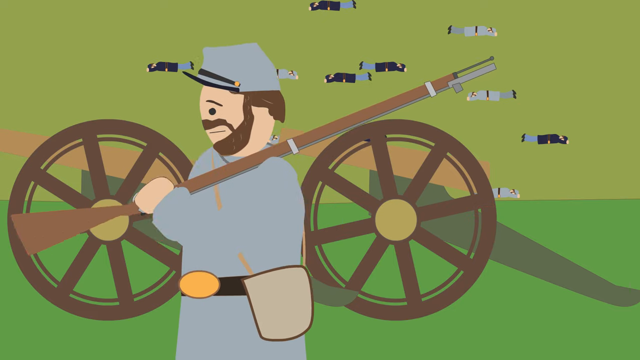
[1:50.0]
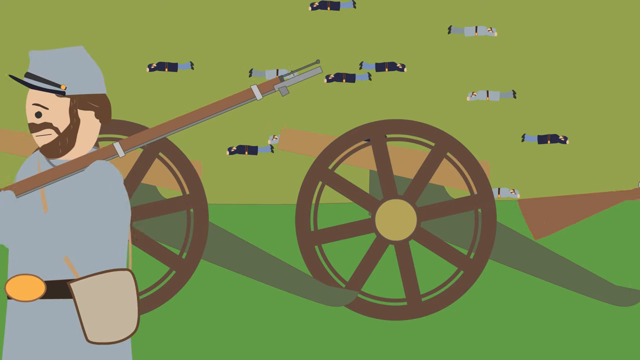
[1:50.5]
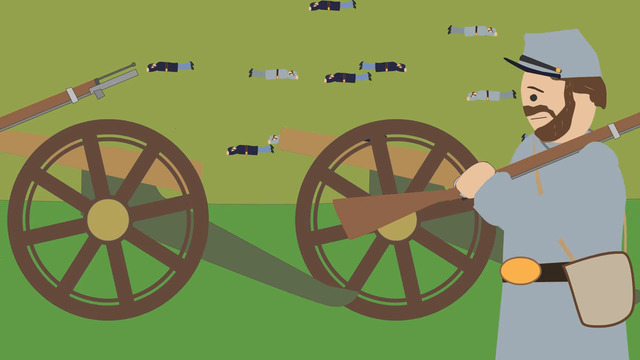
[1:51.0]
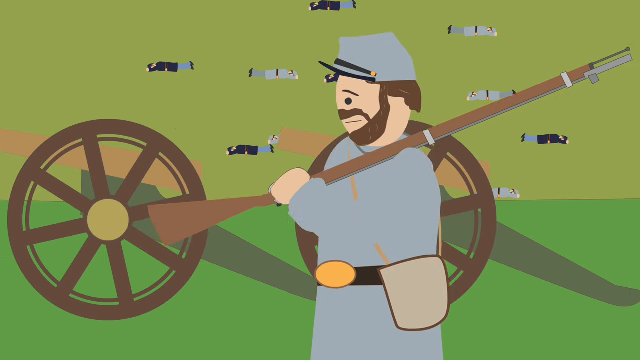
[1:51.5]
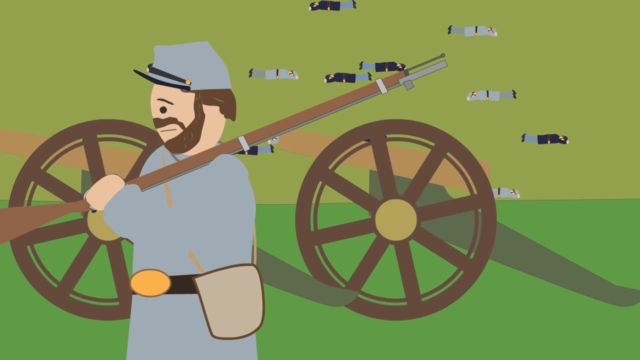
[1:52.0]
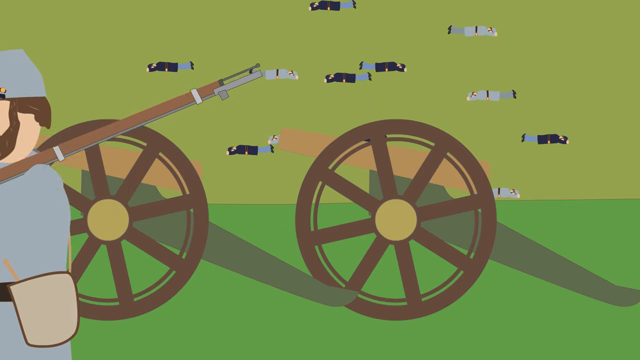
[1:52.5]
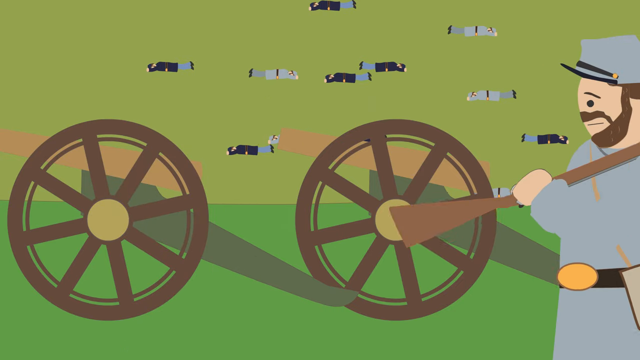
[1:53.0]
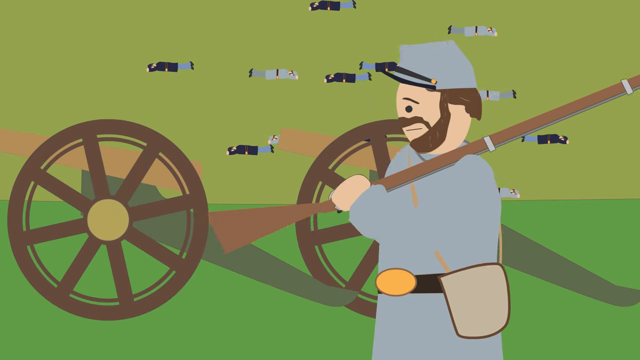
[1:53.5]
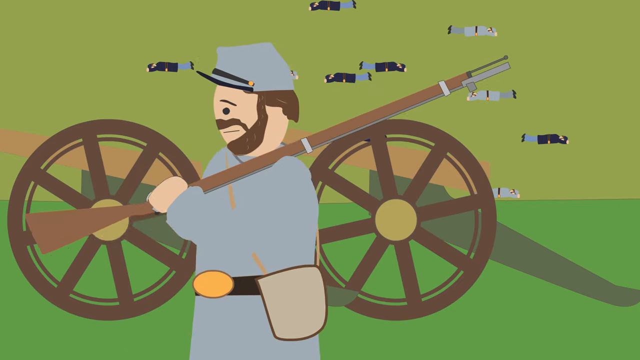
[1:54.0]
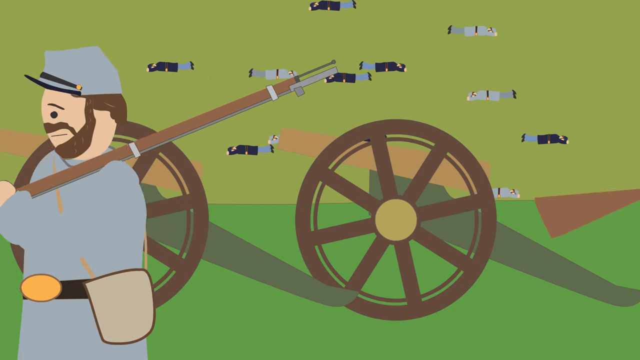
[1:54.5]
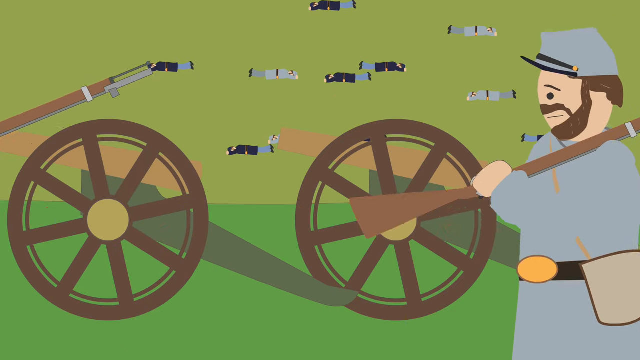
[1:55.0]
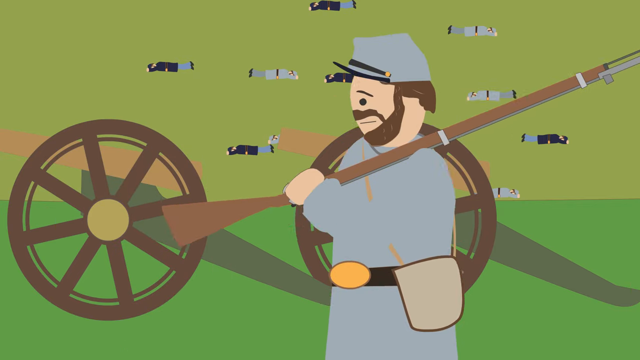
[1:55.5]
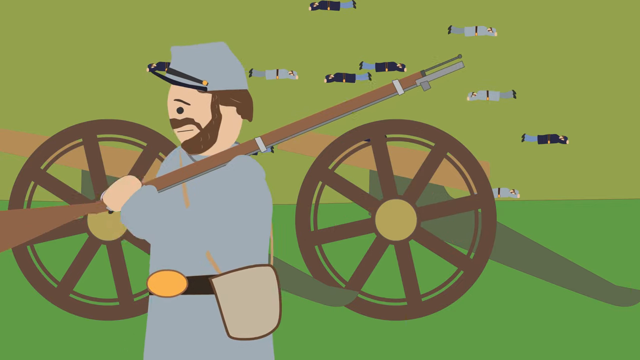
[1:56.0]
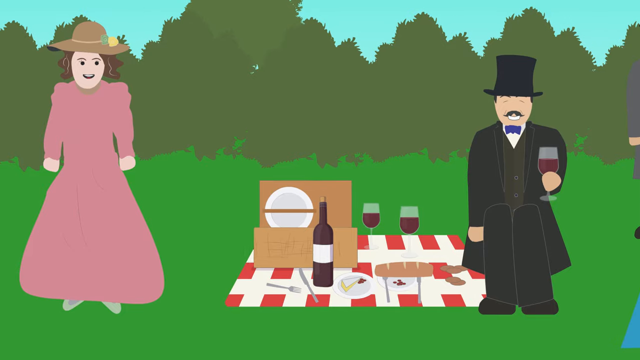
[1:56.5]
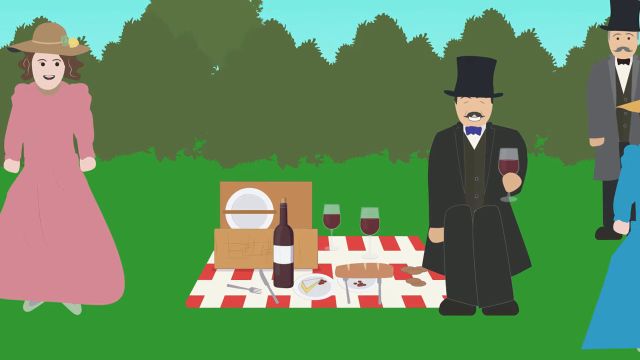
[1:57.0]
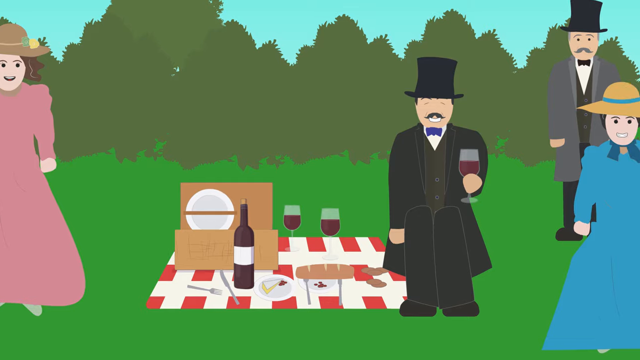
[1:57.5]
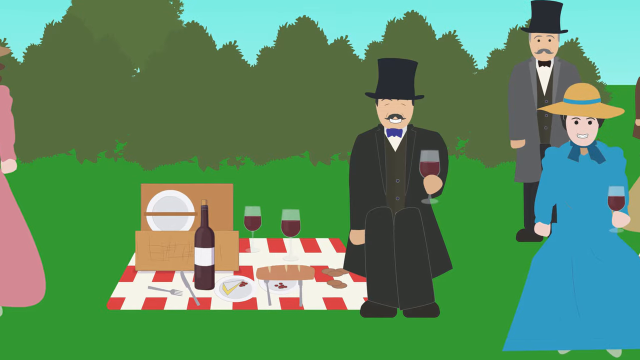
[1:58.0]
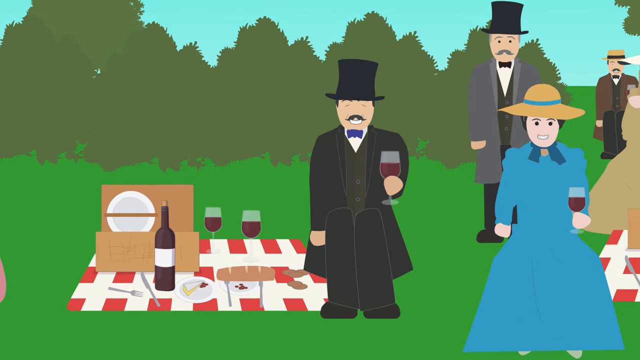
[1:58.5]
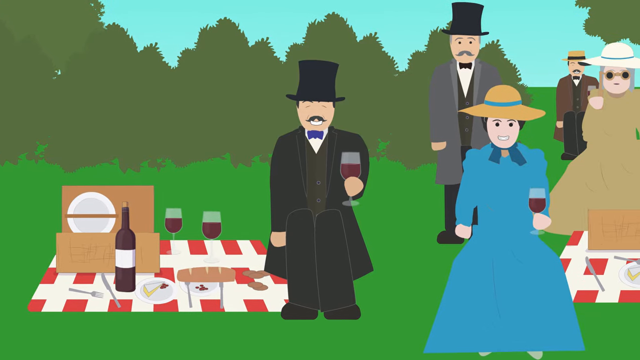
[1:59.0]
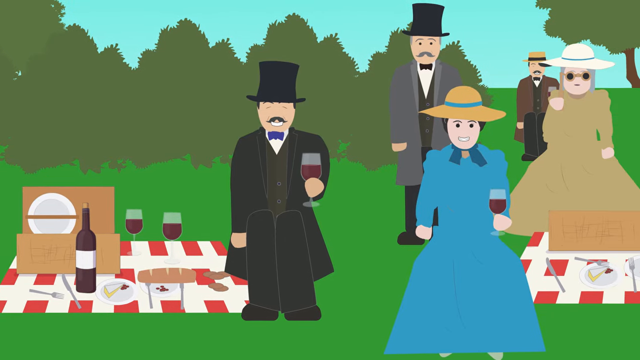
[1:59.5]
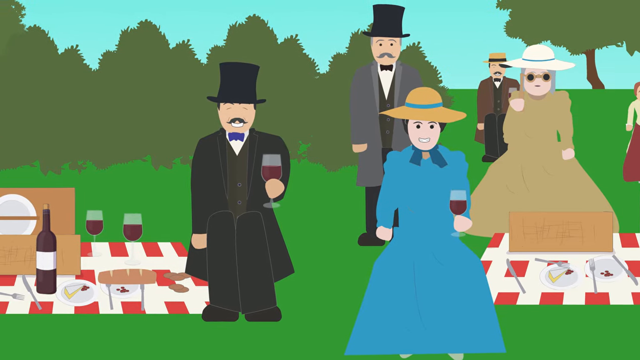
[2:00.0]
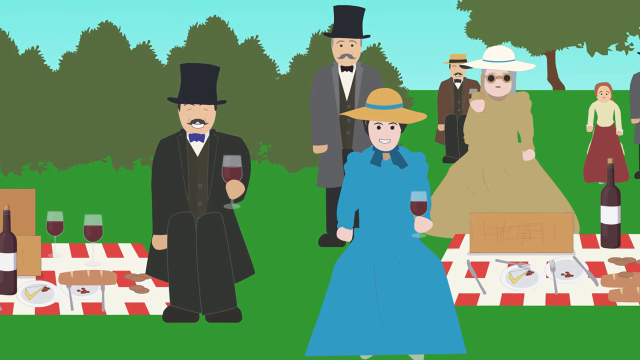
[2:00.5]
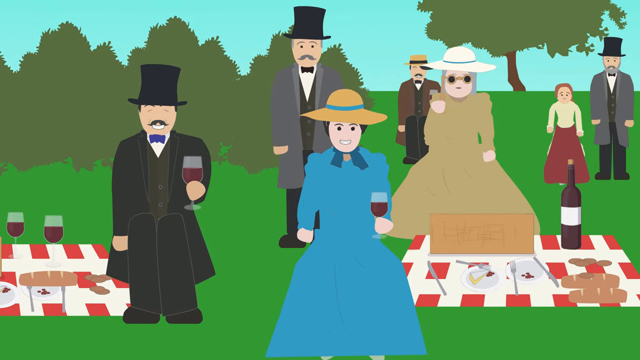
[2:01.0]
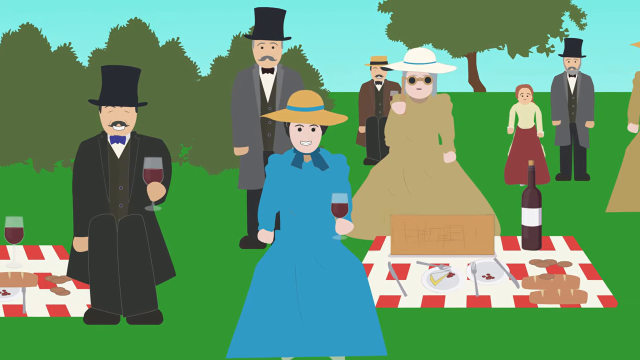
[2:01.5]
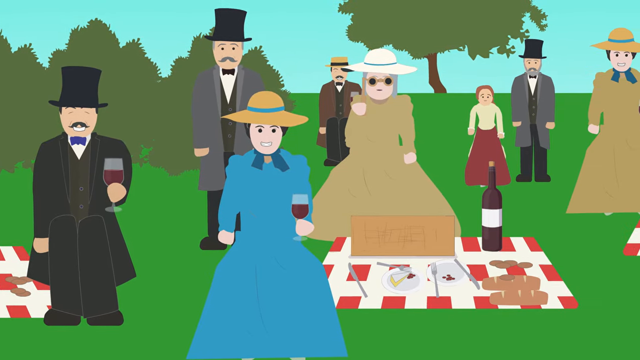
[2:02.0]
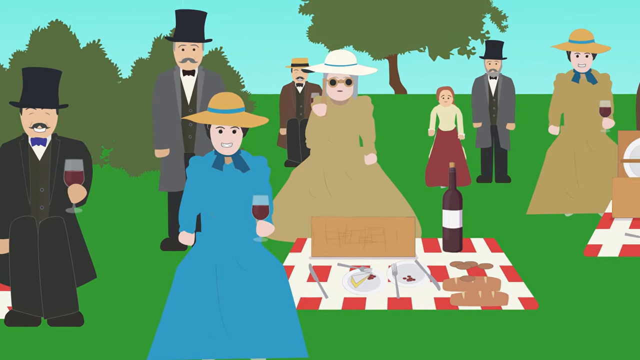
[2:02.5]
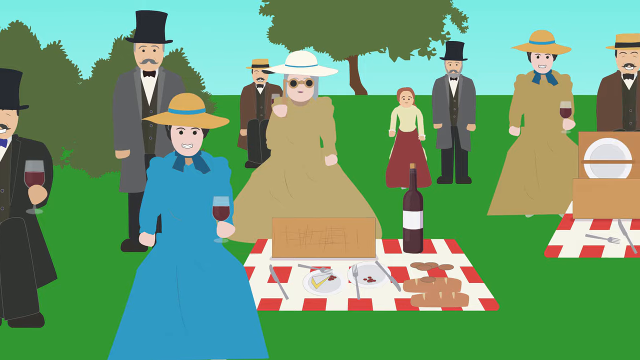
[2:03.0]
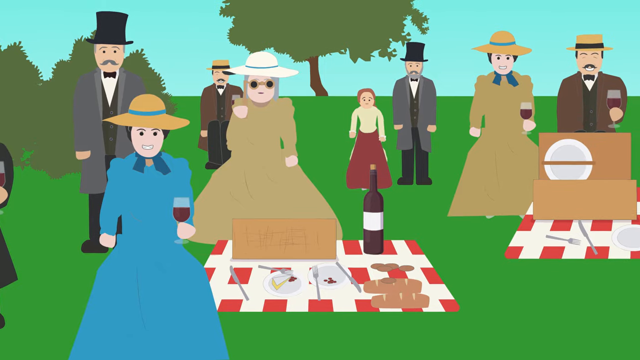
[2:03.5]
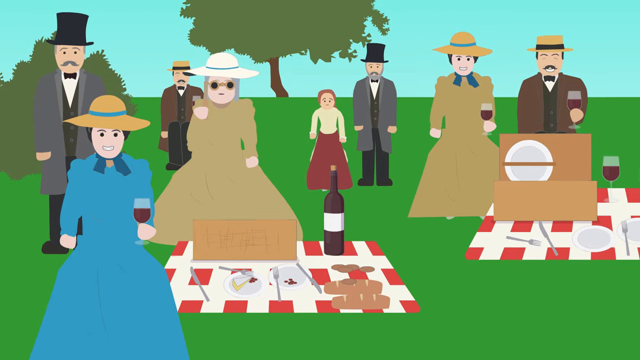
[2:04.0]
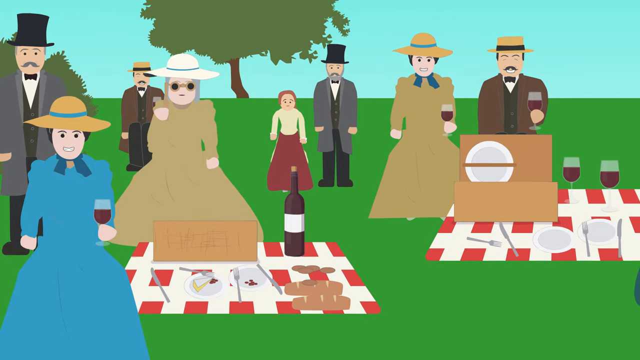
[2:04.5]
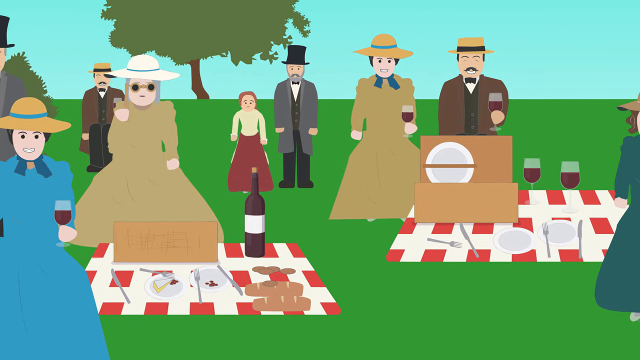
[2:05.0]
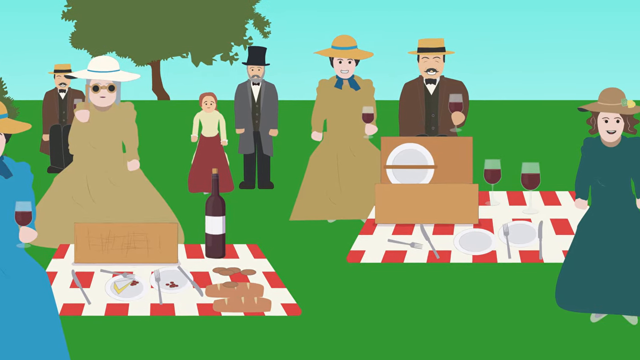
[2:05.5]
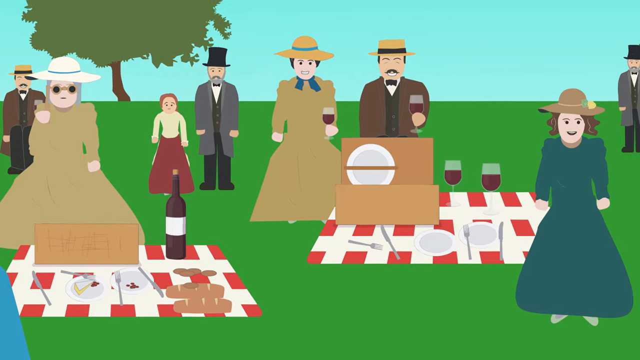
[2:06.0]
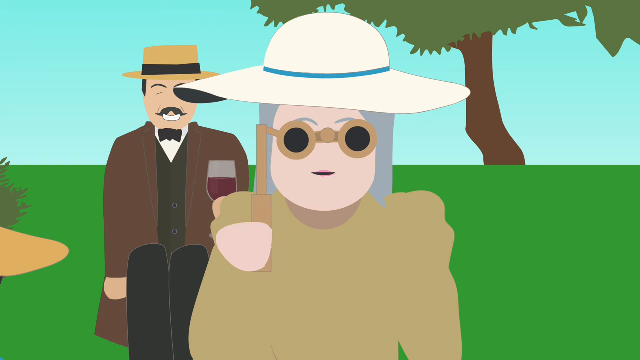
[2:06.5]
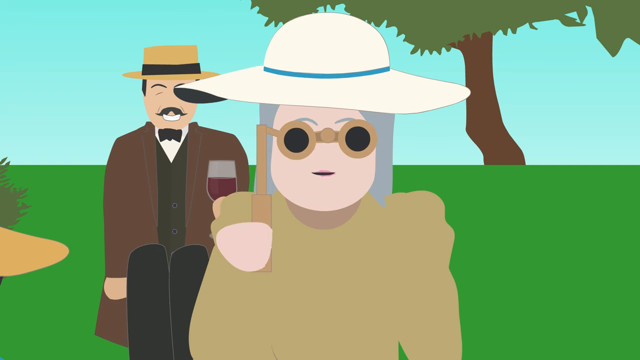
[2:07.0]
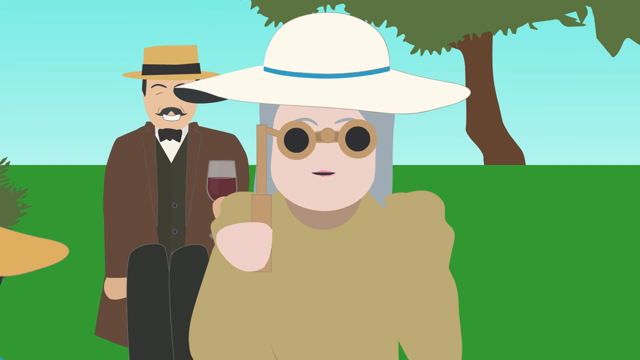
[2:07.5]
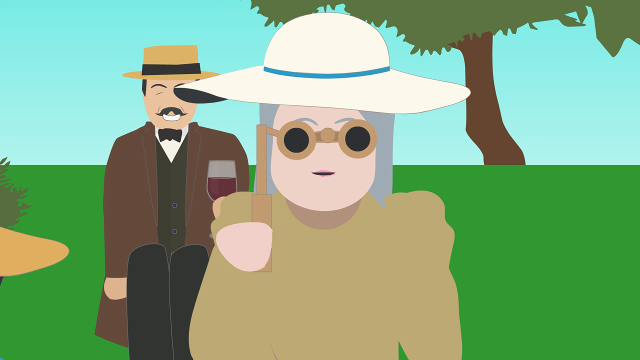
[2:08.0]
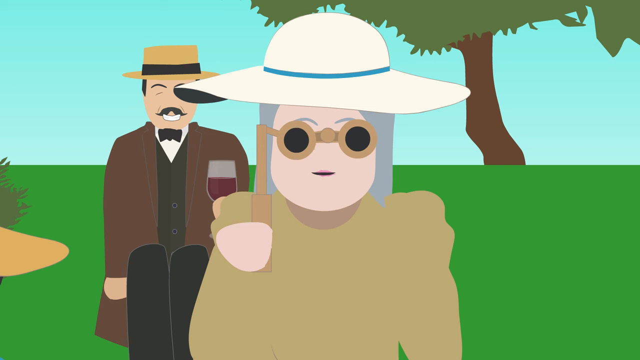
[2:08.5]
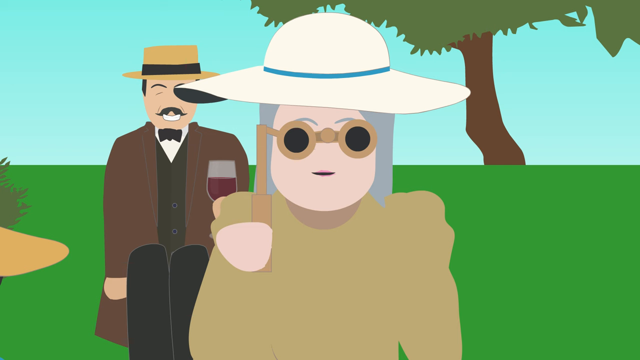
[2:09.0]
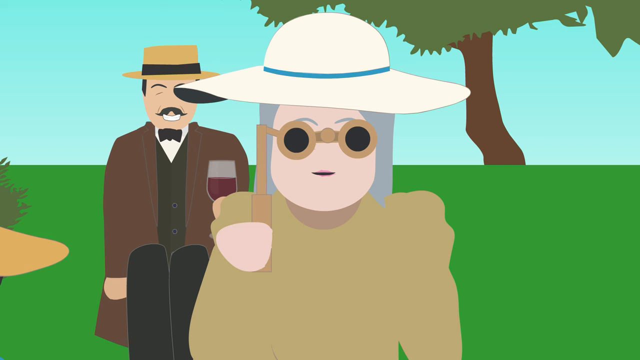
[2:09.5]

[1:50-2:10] People gather on hillsides during the Civil War to watch the battle below them in the fields and valleys. Several of them have picnic blankets spread out on the ground in front of them, along with woven baskets. Several different couples and families watch the battle while having a picnic, drinking wine, eating sandwiches, and using binoculars to look out over the battlefield.